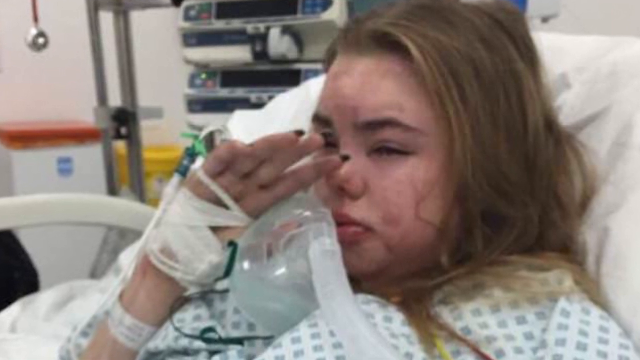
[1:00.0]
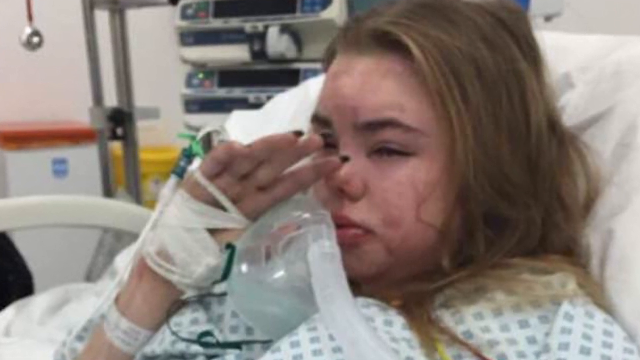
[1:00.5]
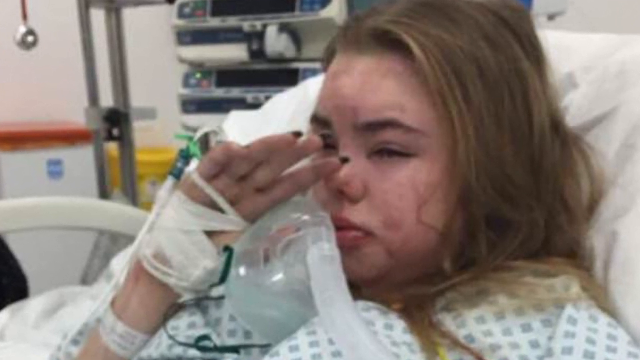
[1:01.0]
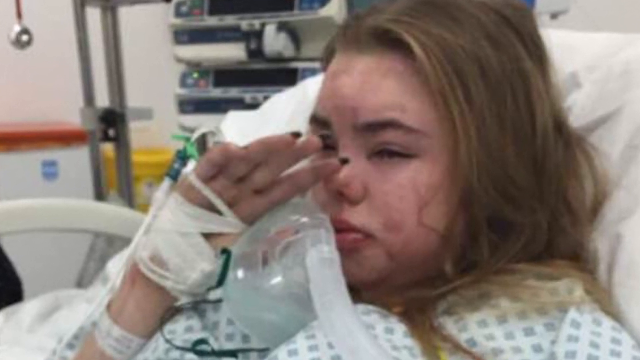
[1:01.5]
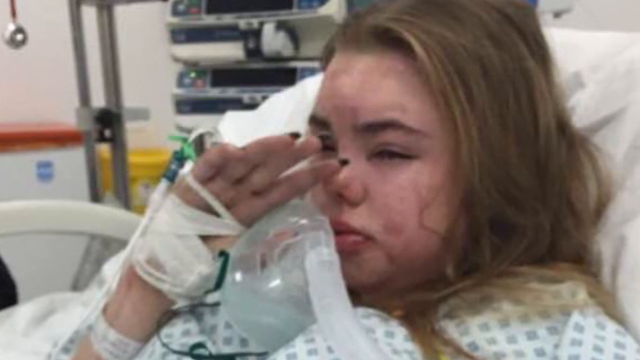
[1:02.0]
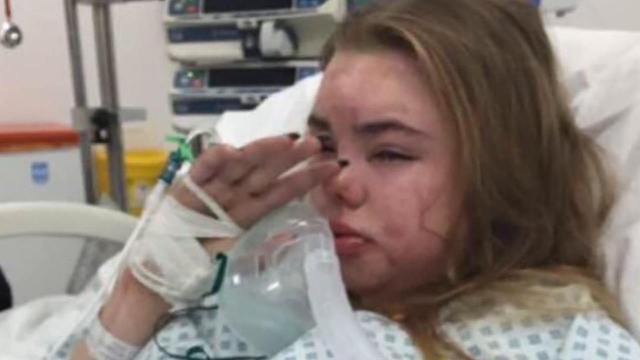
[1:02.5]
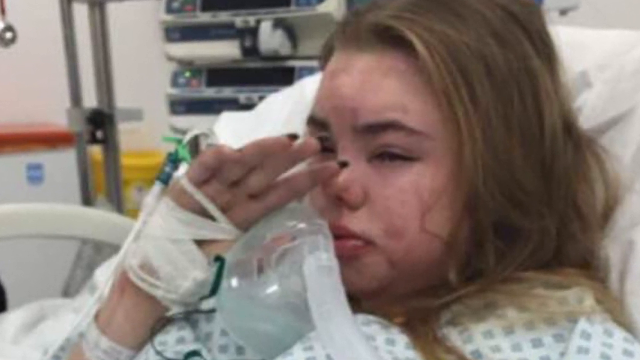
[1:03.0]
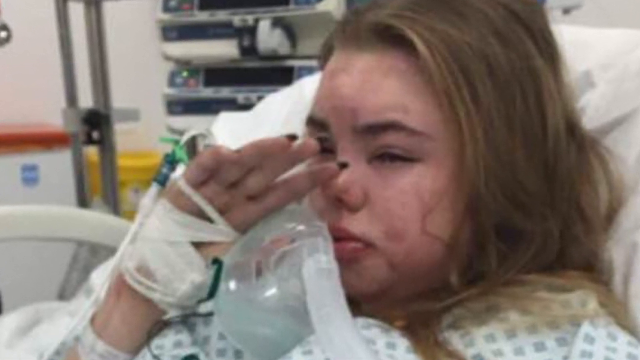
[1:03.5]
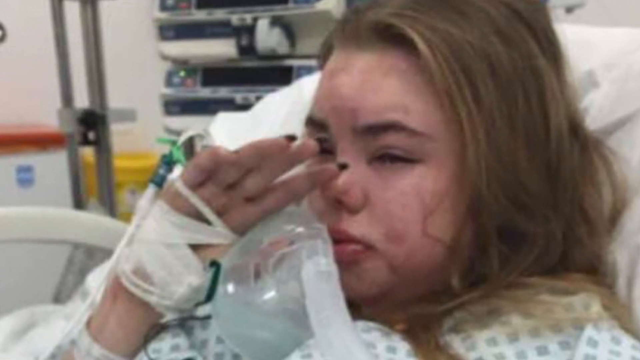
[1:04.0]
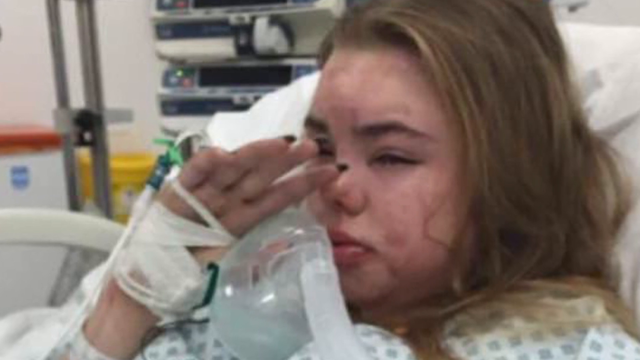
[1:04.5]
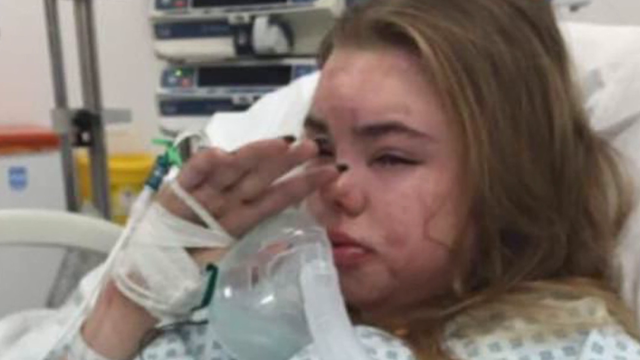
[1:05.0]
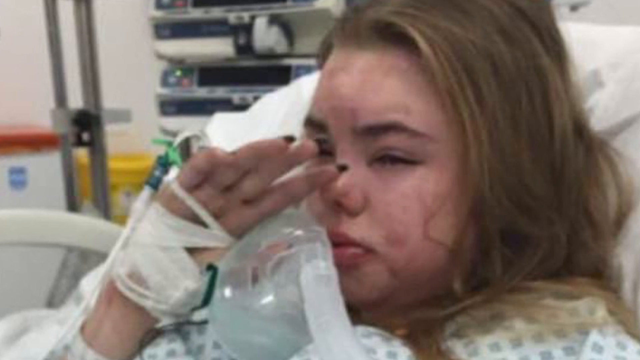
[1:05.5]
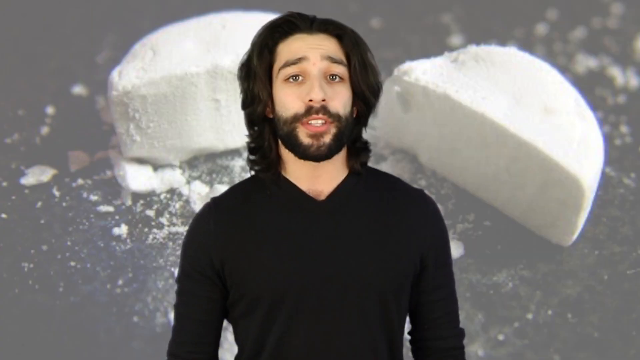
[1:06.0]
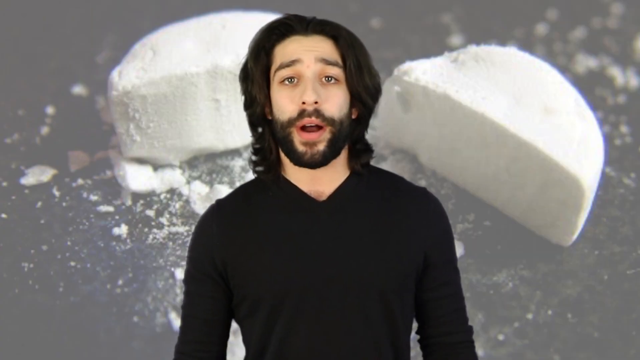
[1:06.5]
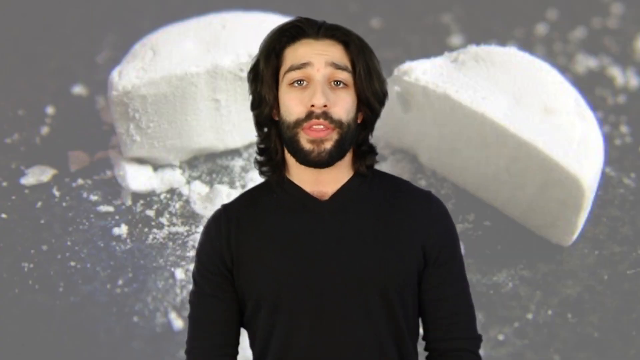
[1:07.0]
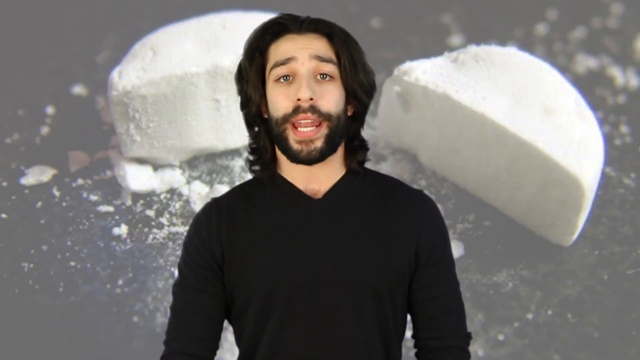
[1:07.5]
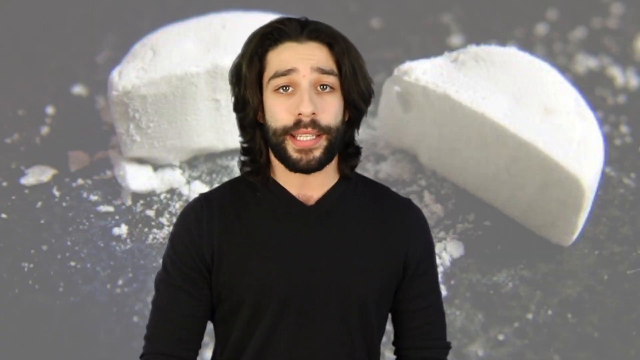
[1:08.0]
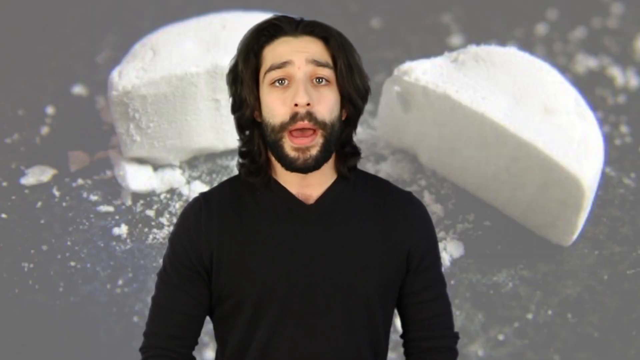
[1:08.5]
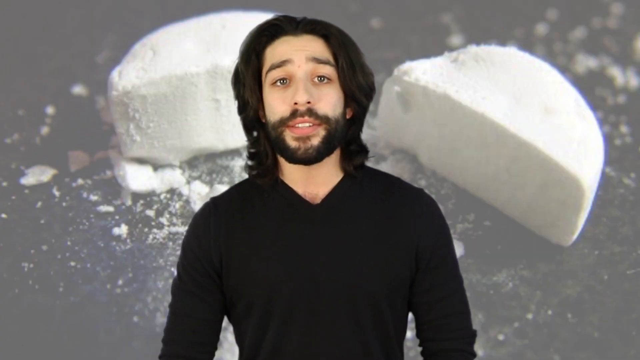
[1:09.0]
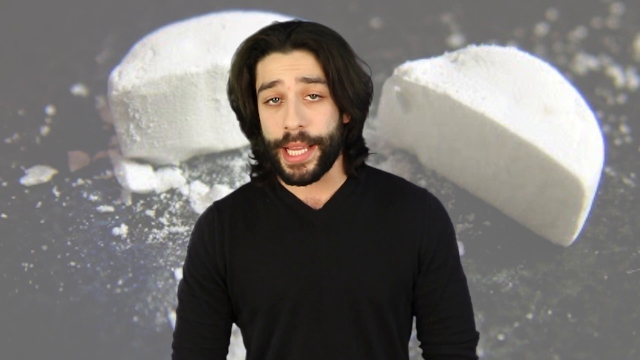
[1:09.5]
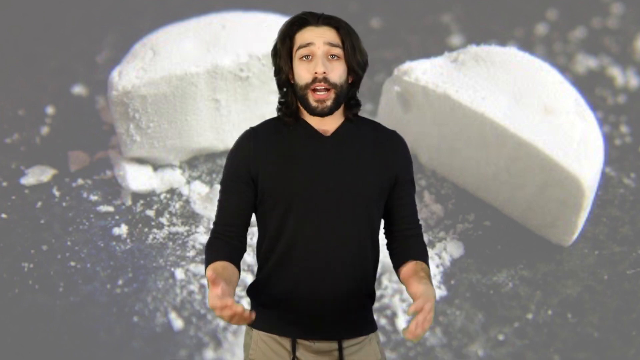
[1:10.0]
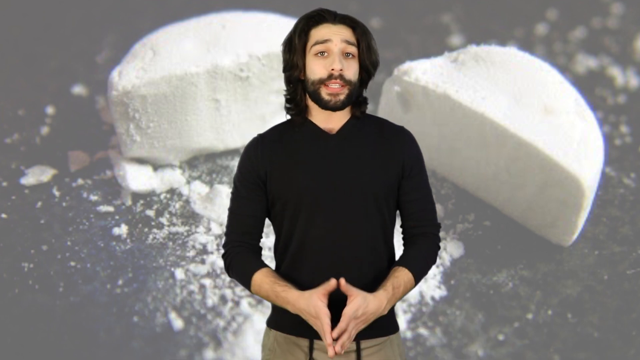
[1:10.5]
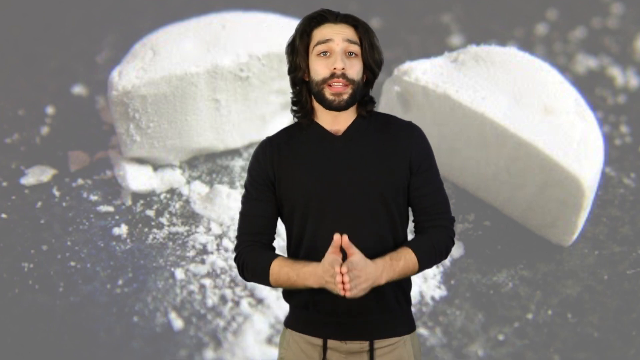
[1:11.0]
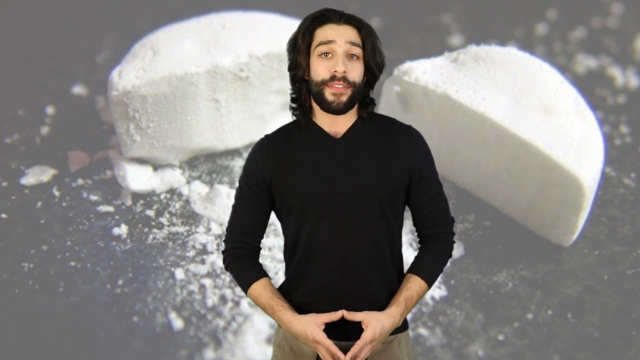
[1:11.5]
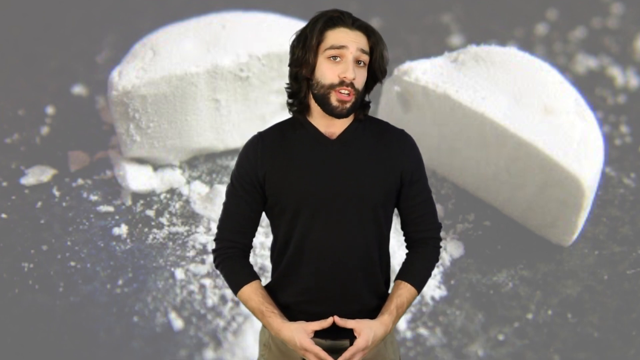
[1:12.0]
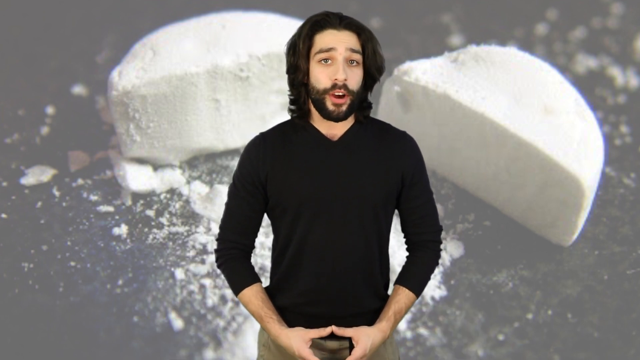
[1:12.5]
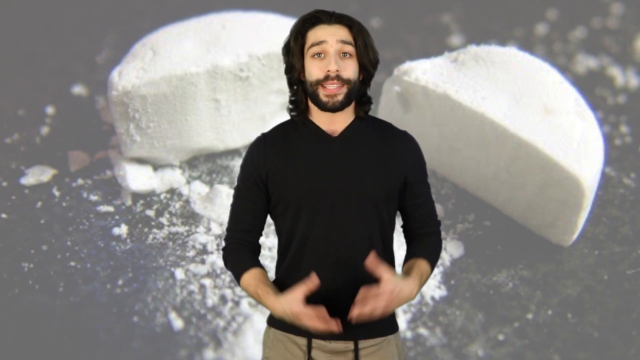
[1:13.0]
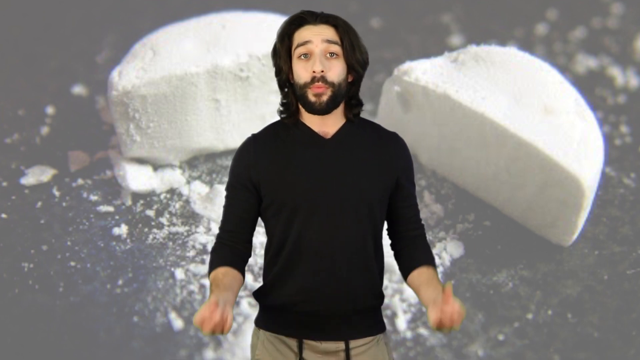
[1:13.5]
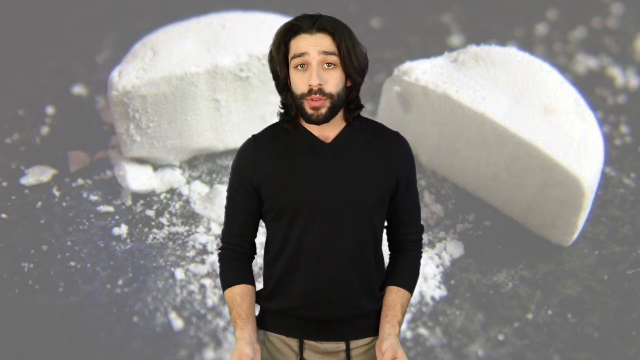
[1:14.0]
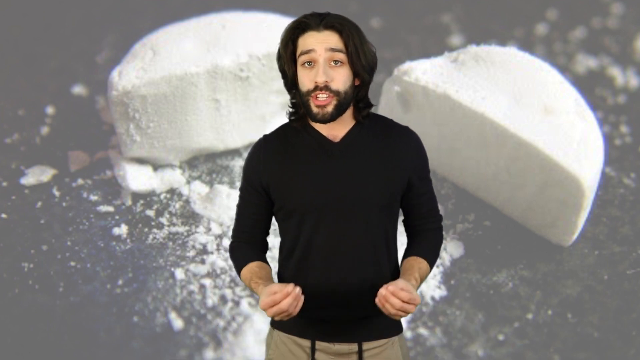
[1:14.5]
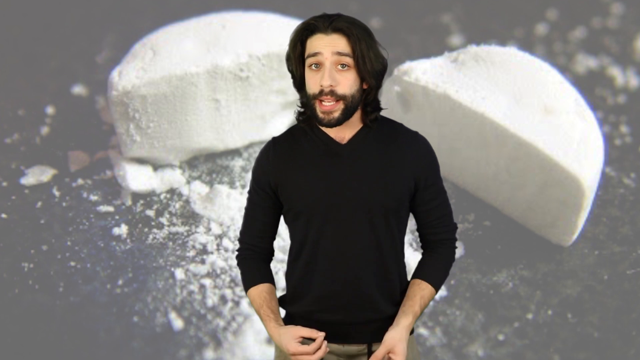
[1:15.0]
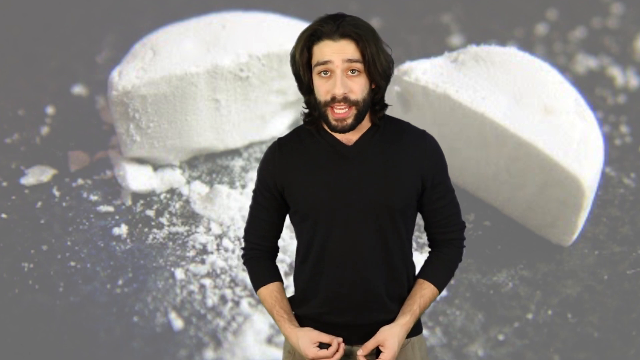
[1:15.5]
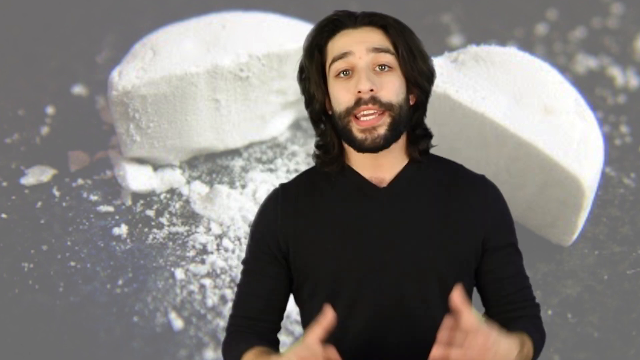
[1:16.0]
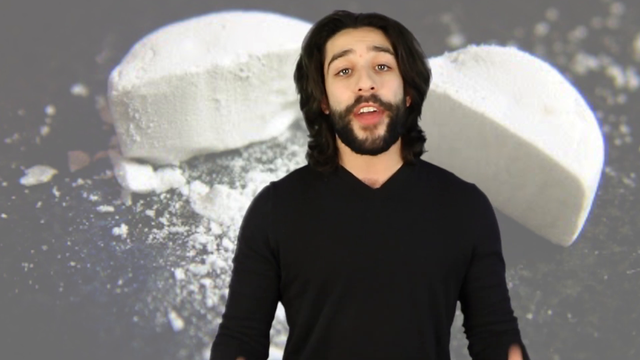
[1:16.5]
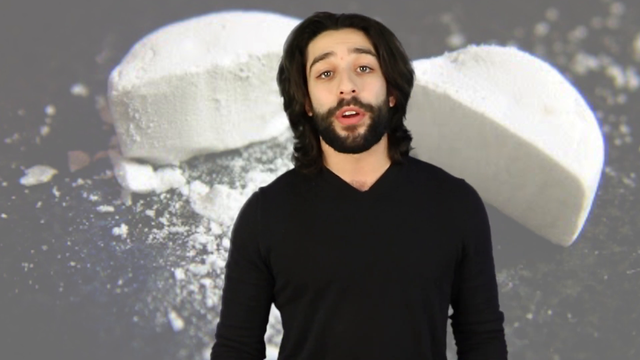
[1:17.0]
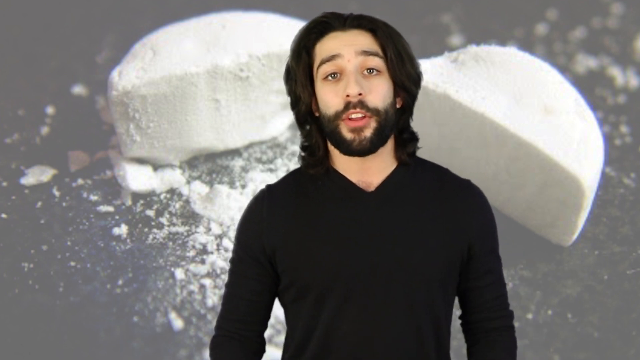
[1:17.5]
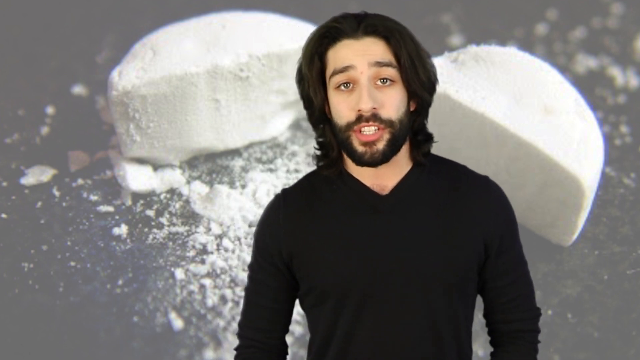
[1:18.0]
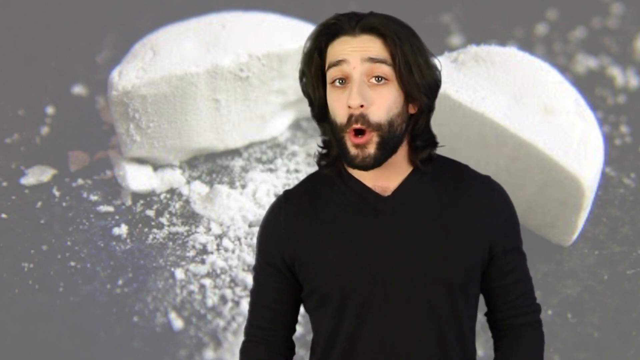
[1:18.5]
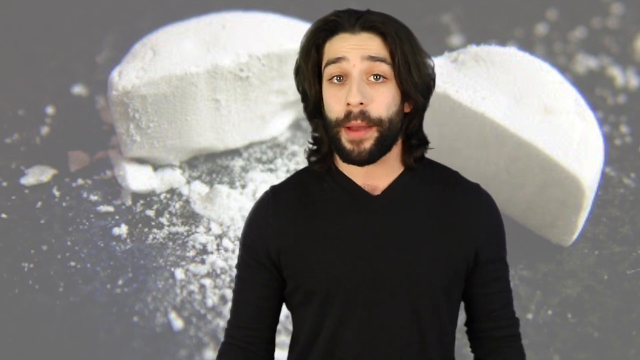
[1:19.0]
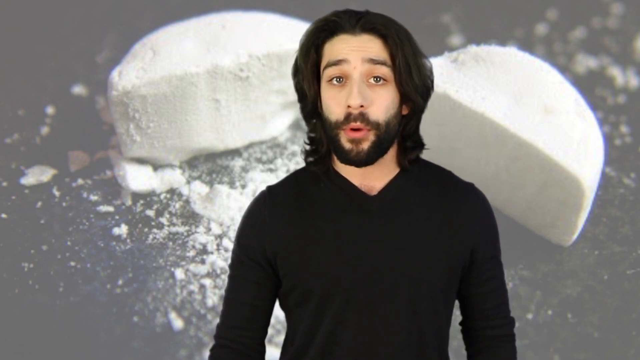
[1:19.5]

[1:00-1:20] The photo of the woman in the hospital who looks like she is crying is shown. Her face is very puffy, her hands are at her face, and her eyes are semi-closed; she seems awake and upset. While holding her hand up to her face, she holds over her thumb what looks to be a gas mask.